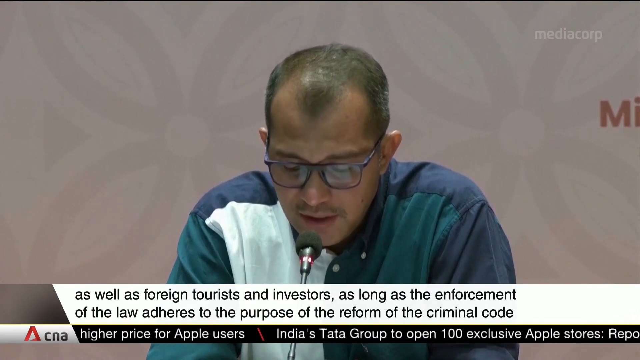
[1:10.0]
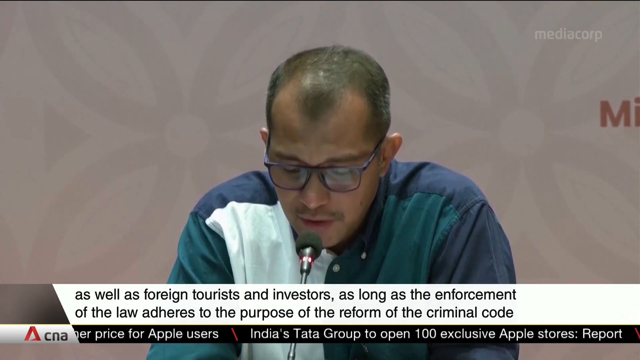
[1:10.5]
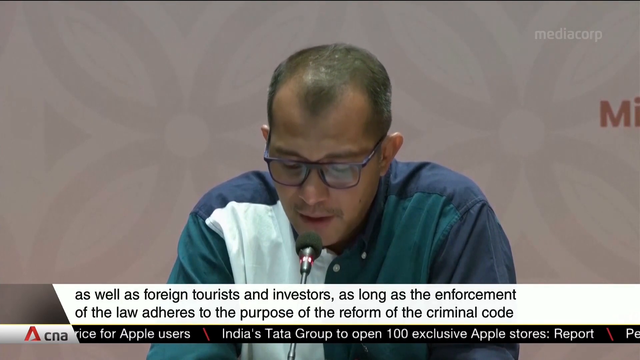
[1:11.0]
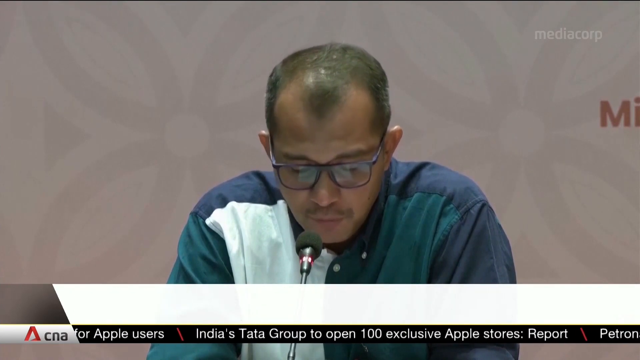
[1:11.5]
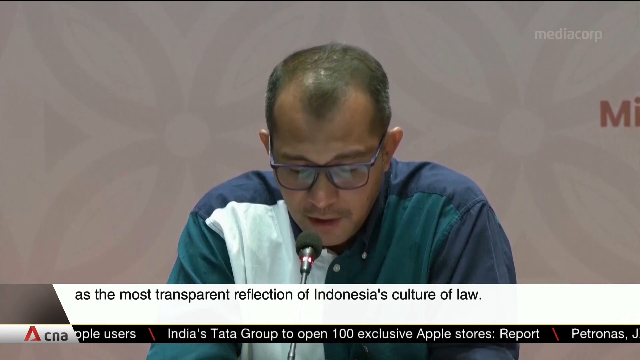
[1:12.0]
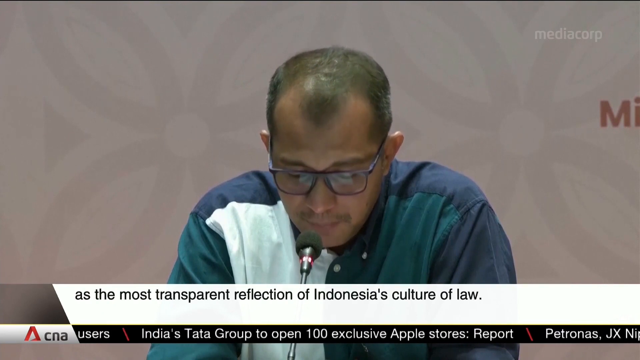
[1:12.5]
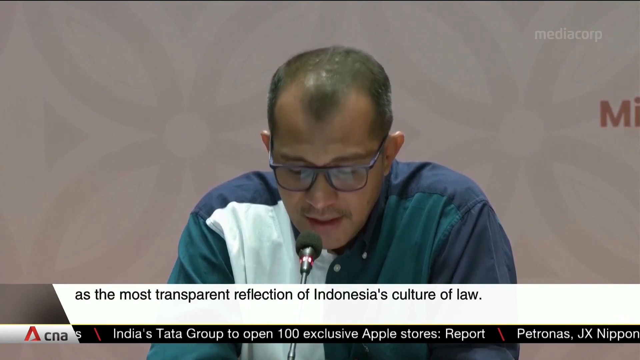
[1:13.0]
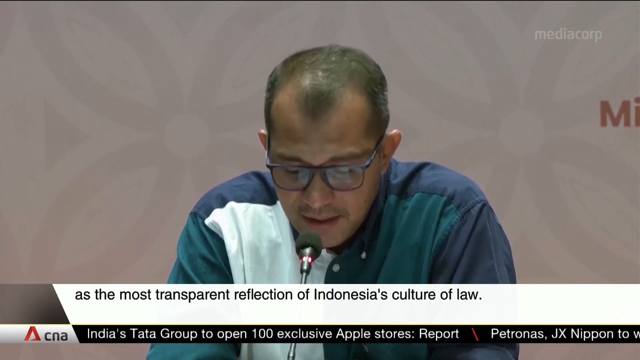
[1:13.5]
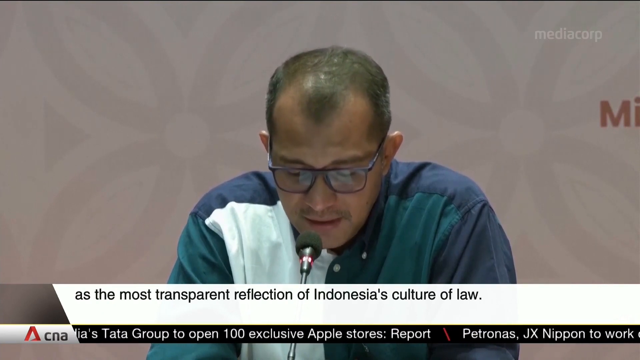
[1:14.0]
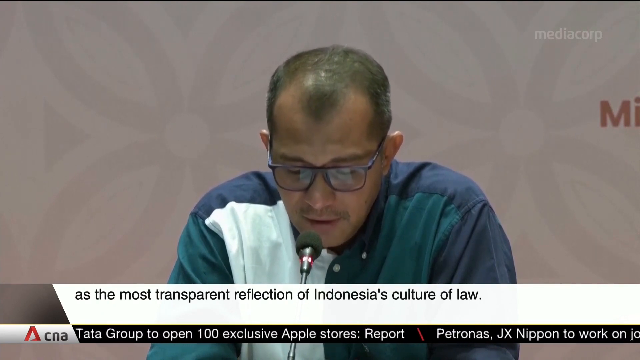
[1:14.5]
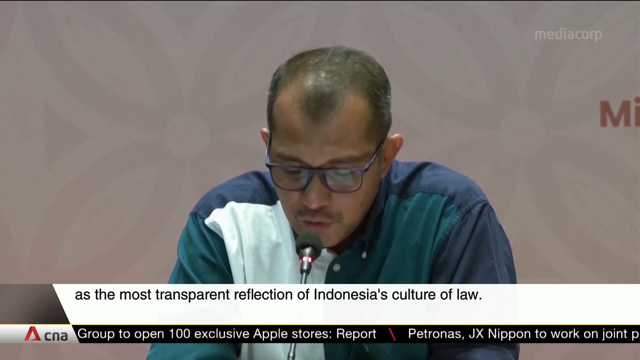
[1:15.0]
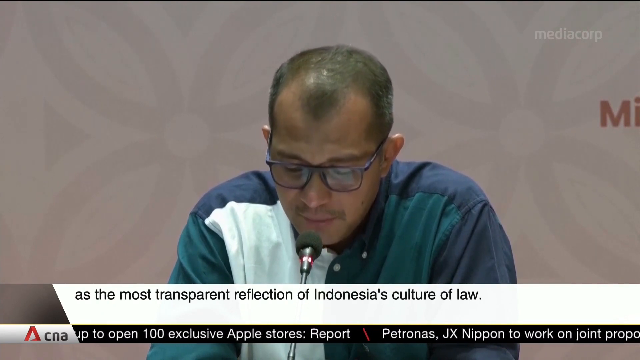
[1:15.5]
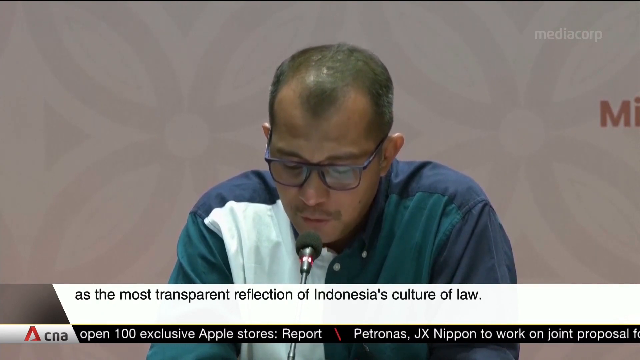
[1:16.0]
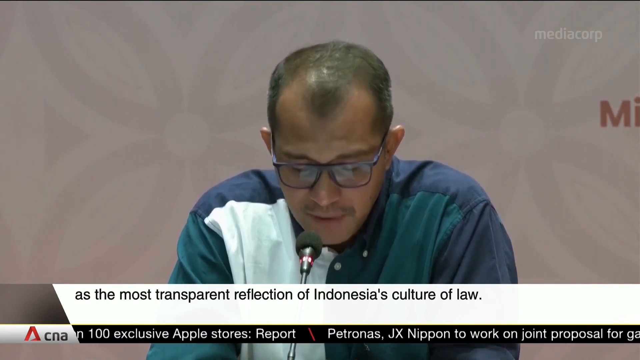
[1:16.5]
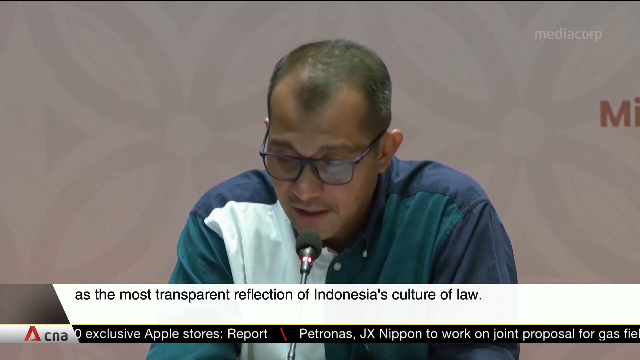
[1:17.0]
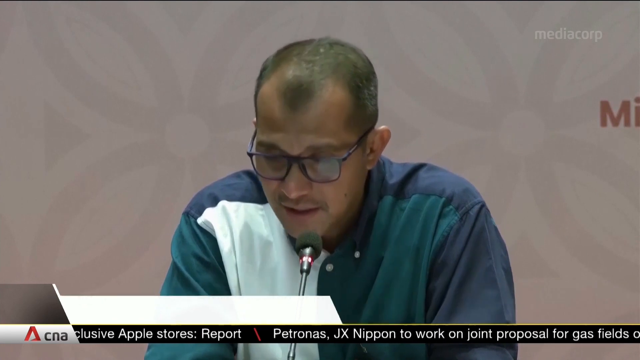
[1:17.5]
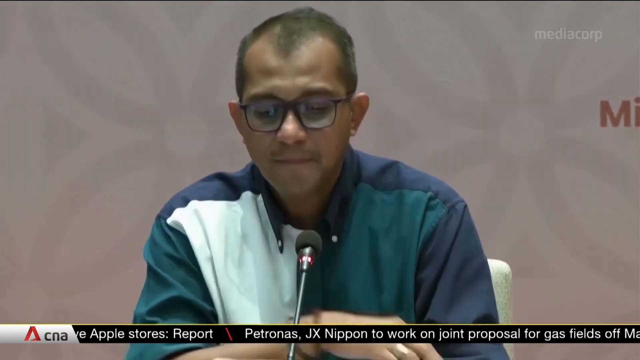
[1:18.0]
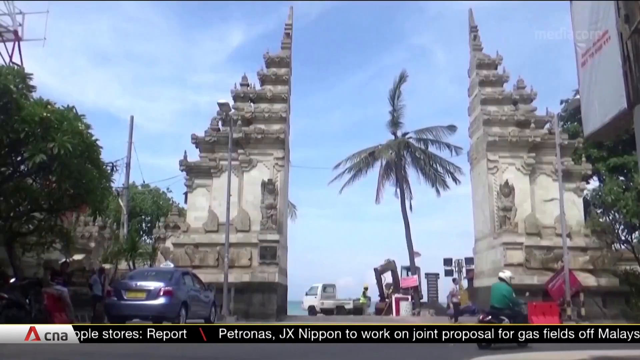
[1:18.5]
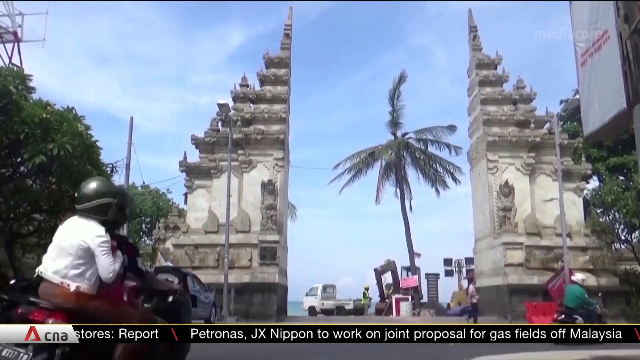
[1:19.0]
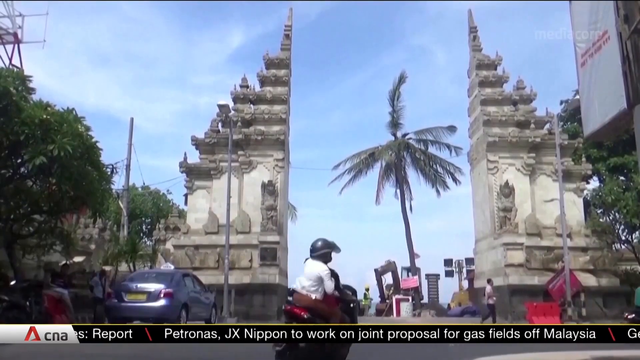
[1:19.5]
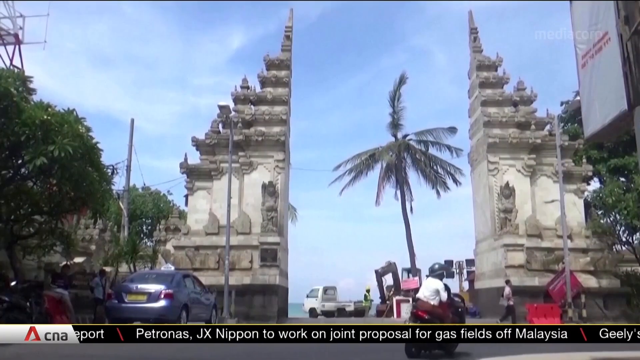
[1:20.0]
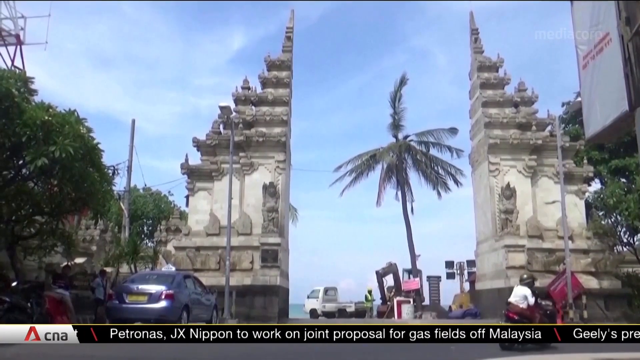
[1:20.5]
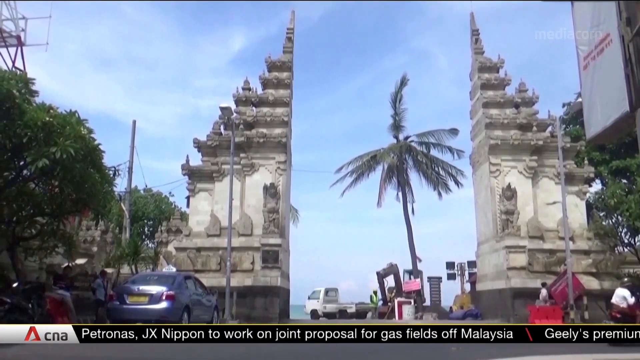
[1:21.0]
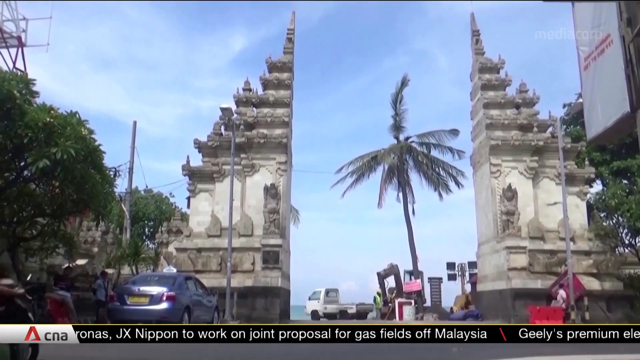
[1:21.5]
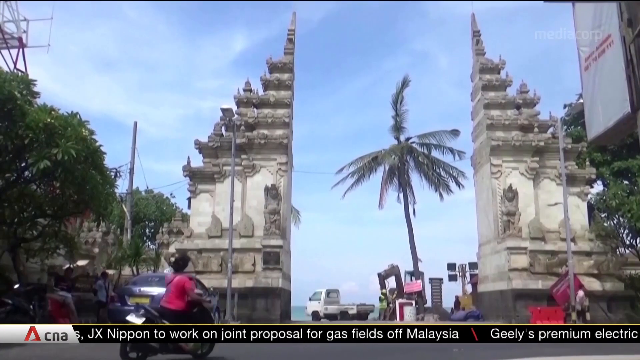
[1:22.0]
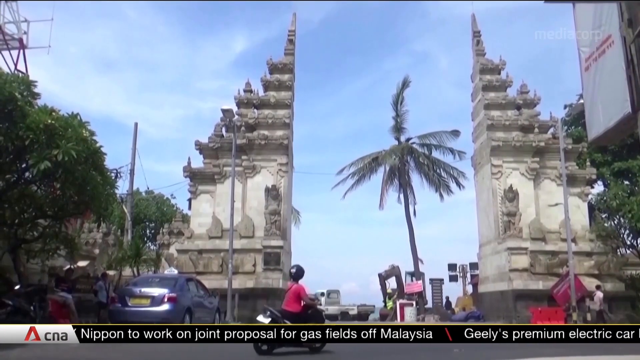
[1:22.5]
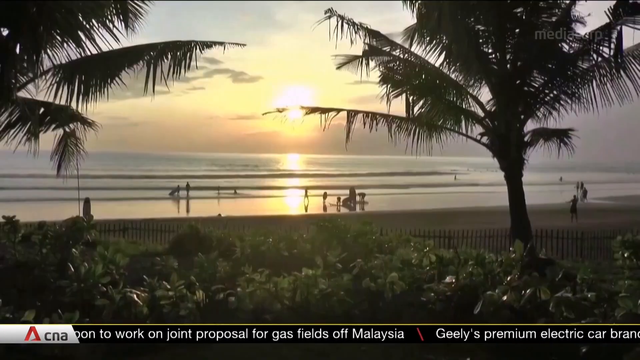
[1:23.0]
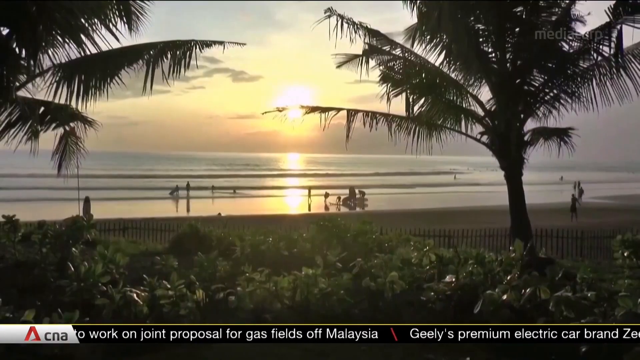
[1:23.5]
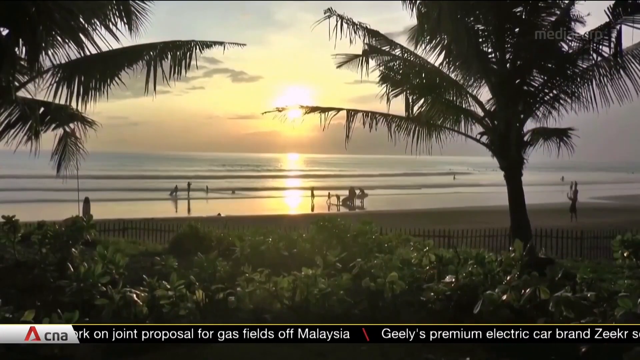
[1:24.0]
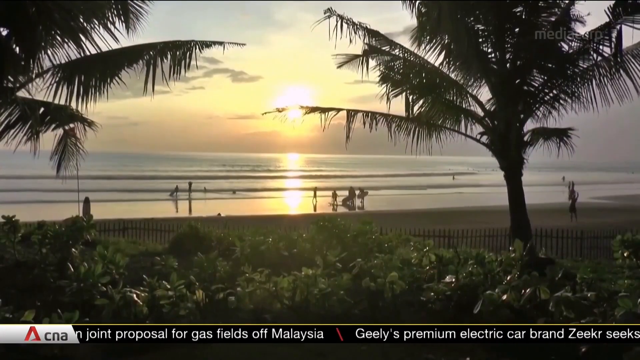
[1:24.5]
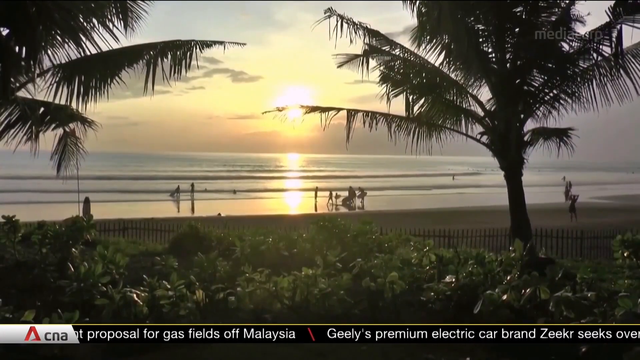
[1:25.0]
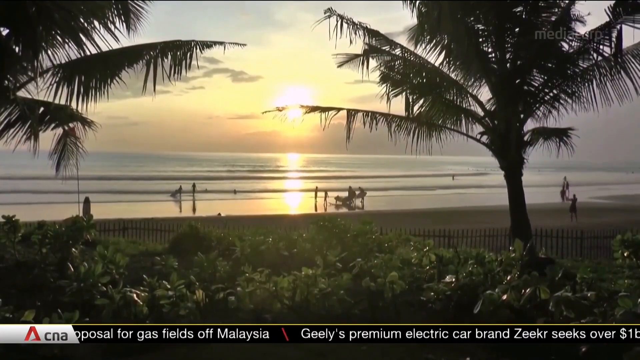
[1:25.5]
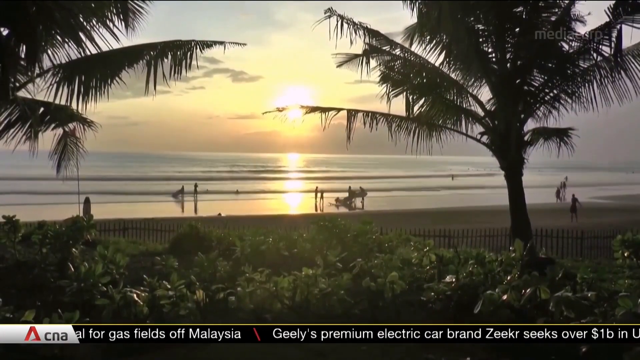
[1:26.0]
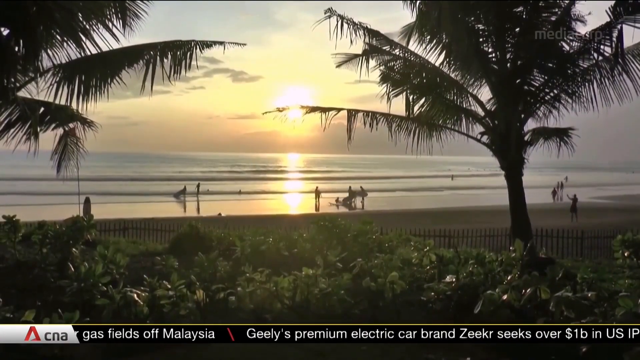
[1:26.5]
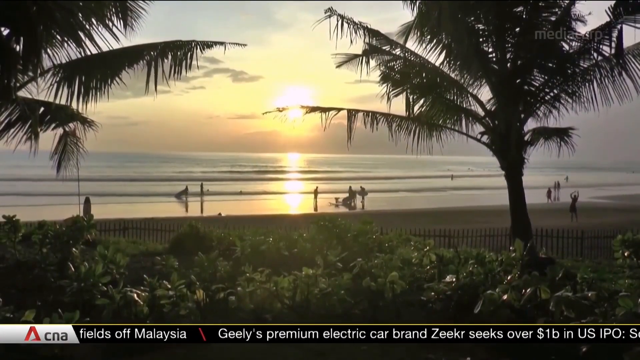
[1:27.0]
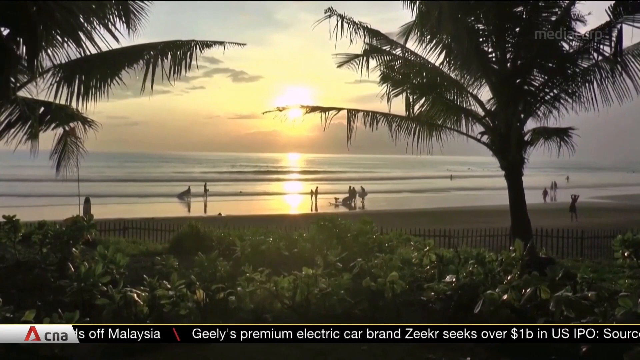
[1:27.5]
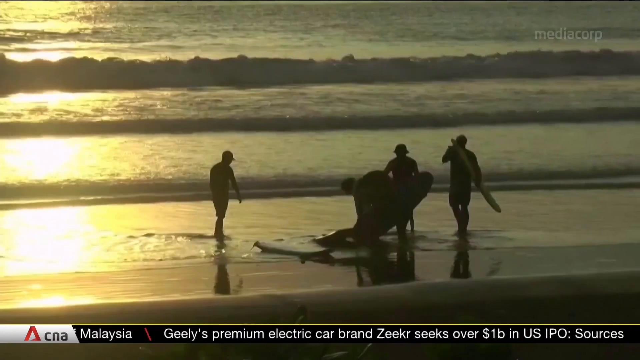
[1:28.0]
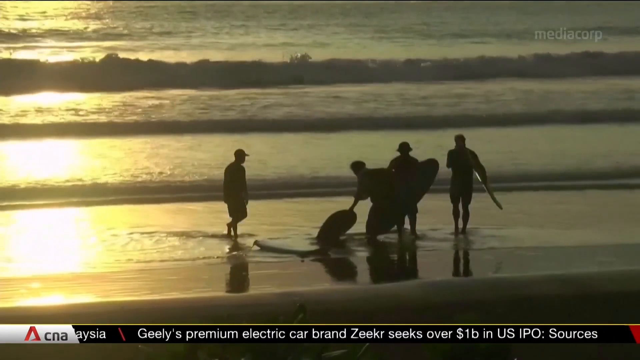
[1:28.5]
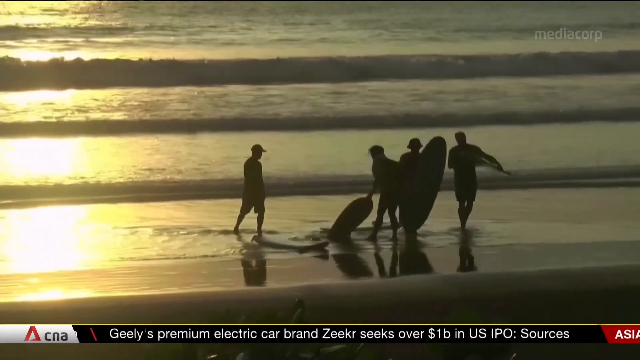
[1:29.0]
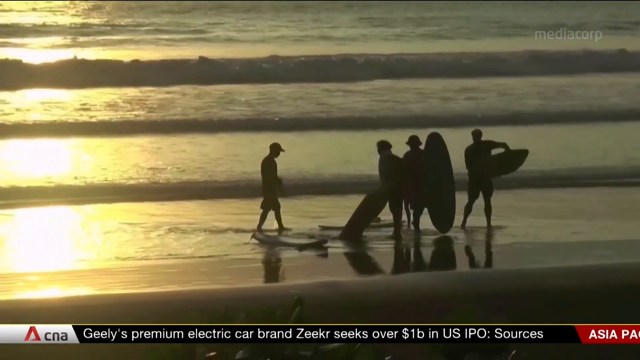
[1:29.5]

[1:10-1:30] The man talks into a microphone with his glasses on. Black text reads "it was the most transparent reflection of Indonesia's culture of law." The video then shows a building with something in the middle of it; what looks like a poster with a very blue sky and a palm tree seems to split the building in half. The palm tree is missing several middle branches, with one sticking up in the middle, making it look odd. People outside are walking and riding bikes, one wearing a black helmet and a white shirt. There are some cars, trees, telephone poles and lots of blue sky. Next, a beach appears with the sun setting on the horizon, a very flat ocean, green plants in the foreground and about 10 people on the beach.